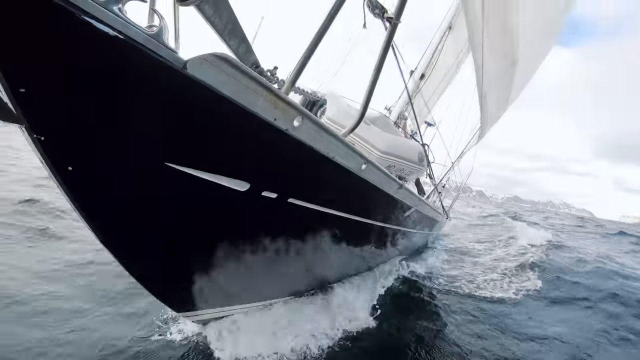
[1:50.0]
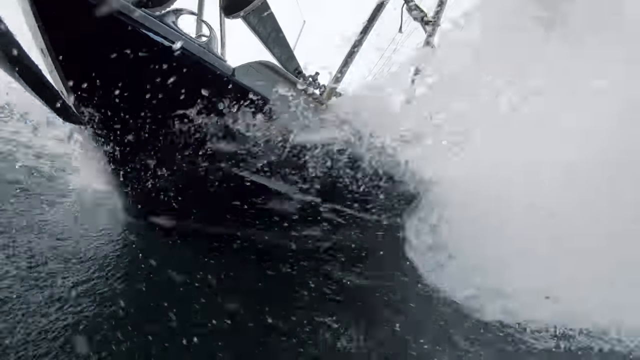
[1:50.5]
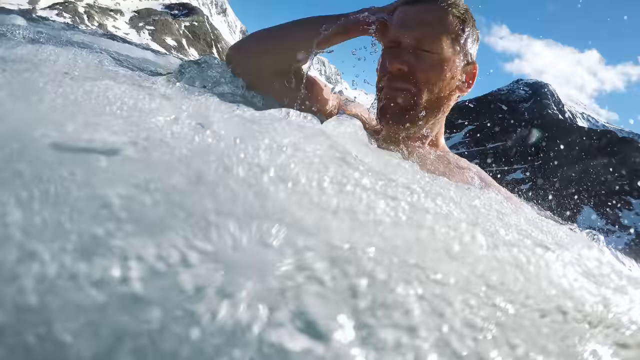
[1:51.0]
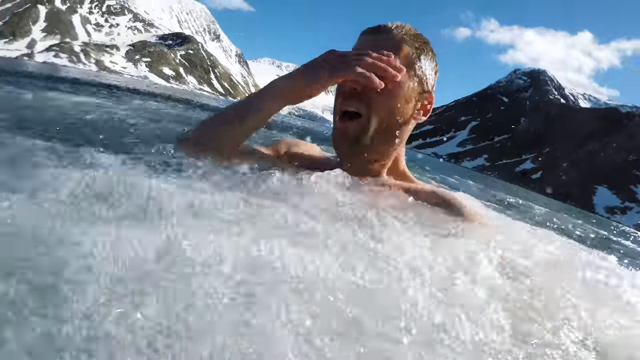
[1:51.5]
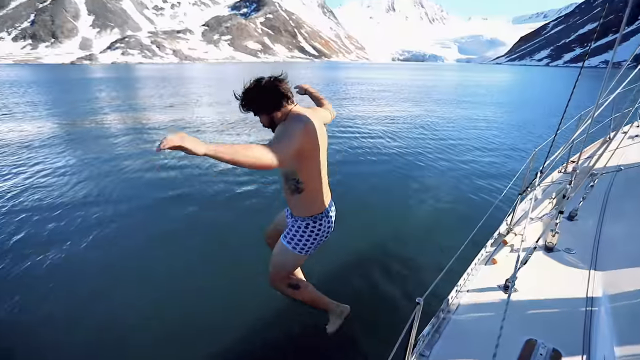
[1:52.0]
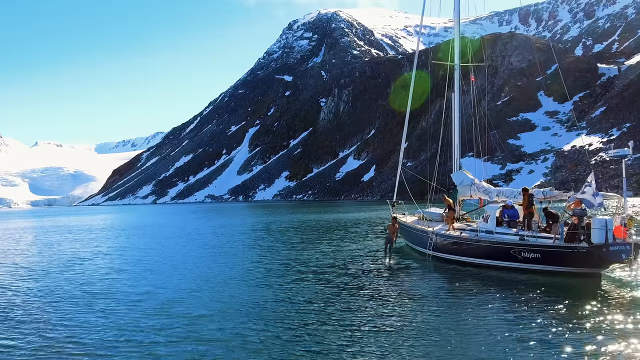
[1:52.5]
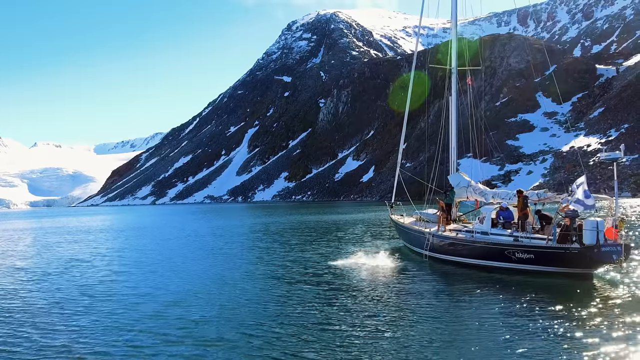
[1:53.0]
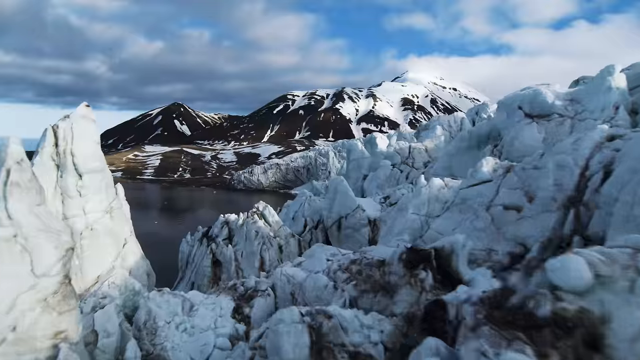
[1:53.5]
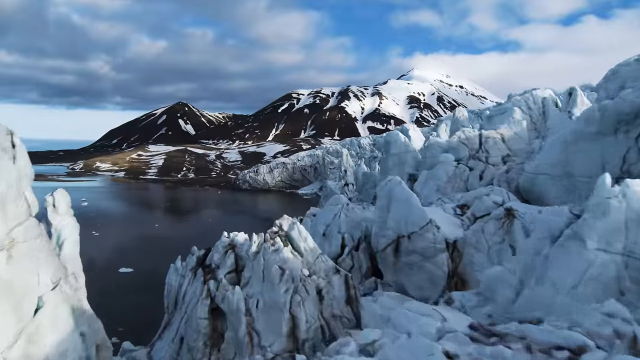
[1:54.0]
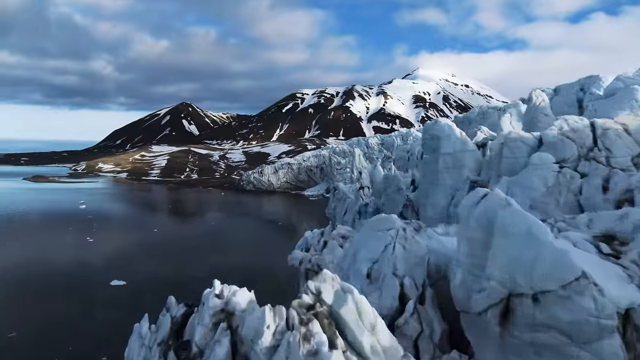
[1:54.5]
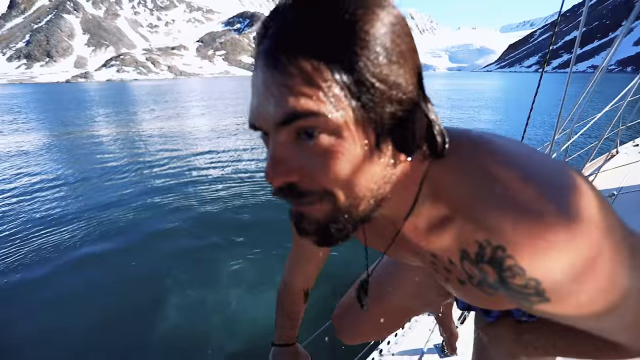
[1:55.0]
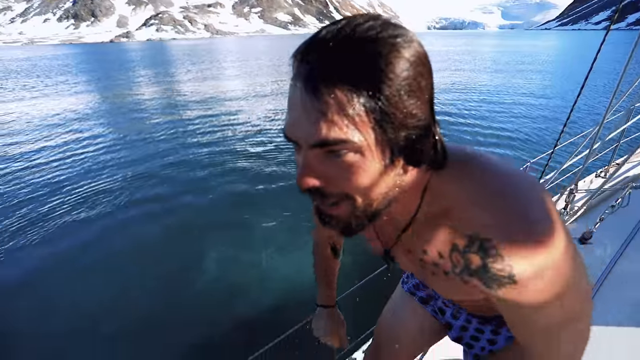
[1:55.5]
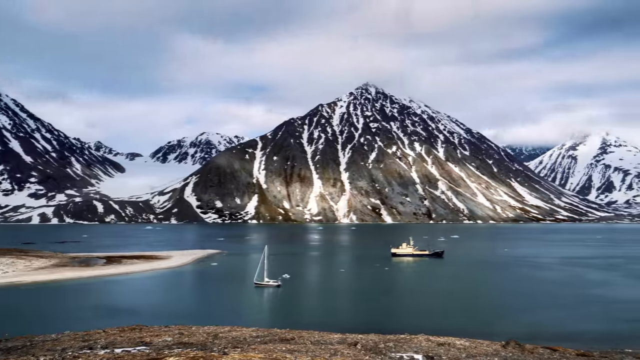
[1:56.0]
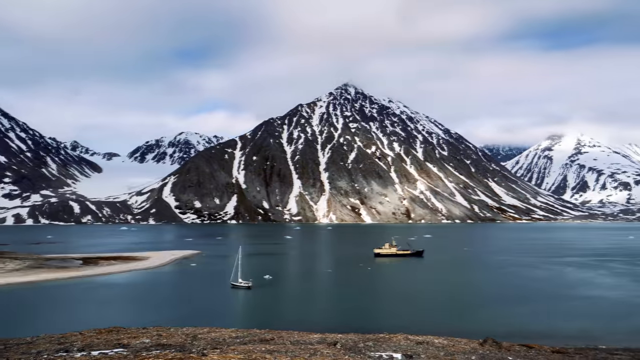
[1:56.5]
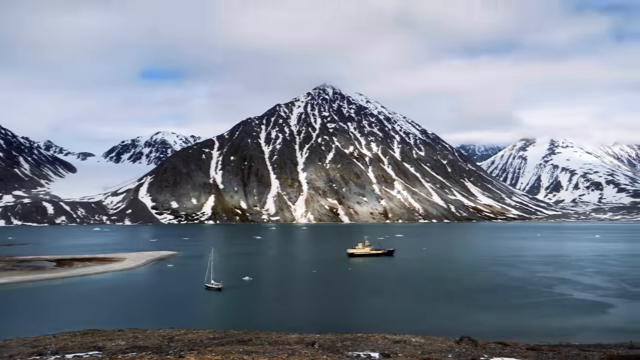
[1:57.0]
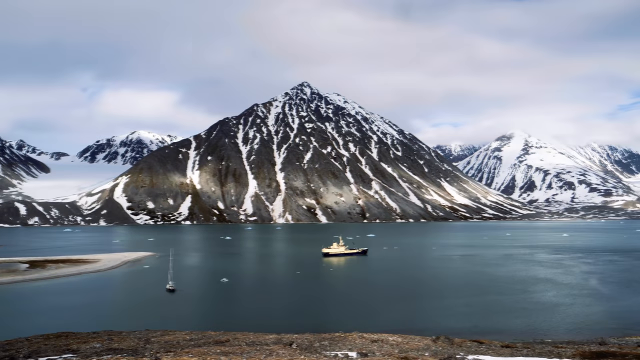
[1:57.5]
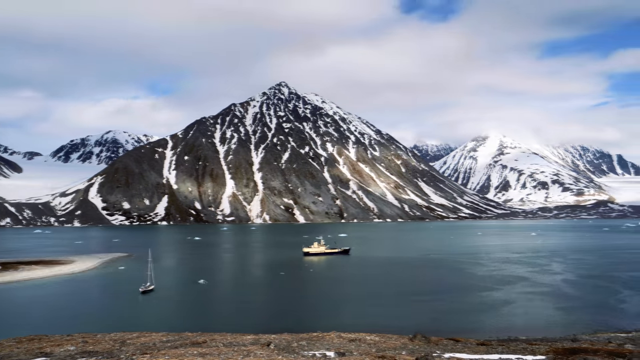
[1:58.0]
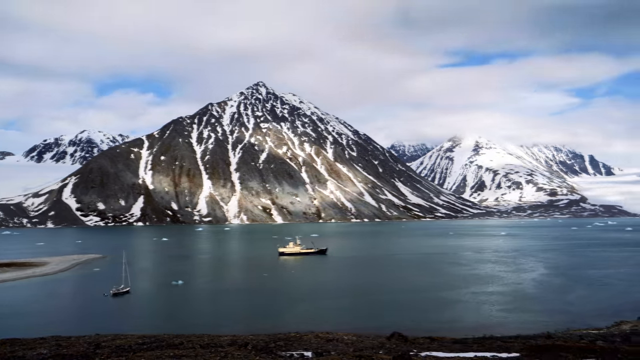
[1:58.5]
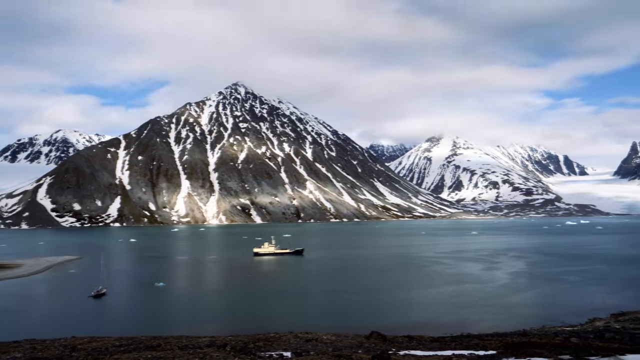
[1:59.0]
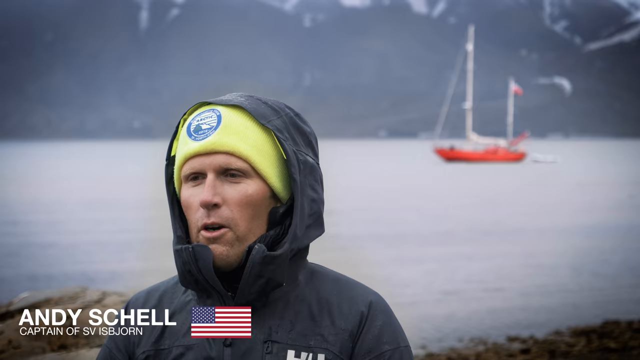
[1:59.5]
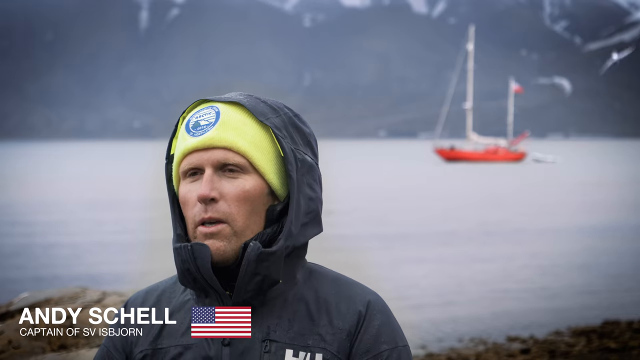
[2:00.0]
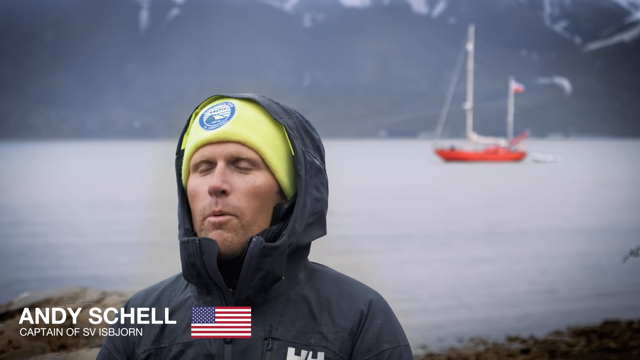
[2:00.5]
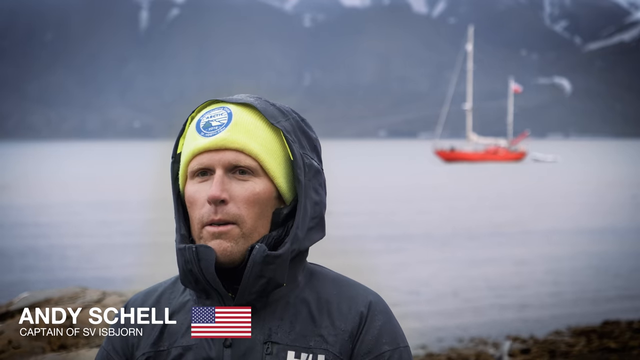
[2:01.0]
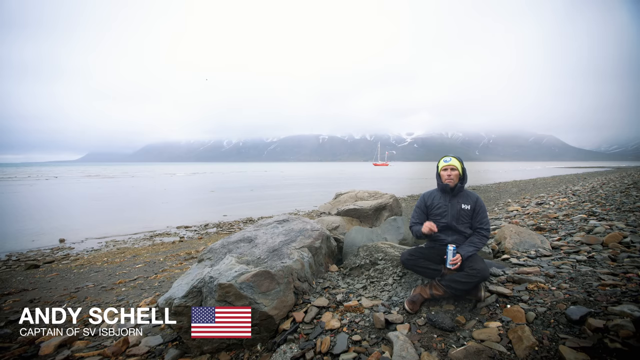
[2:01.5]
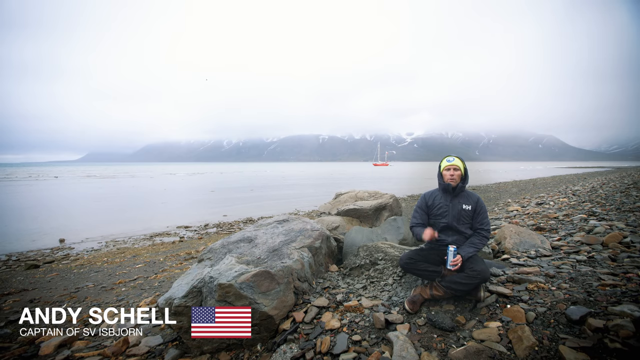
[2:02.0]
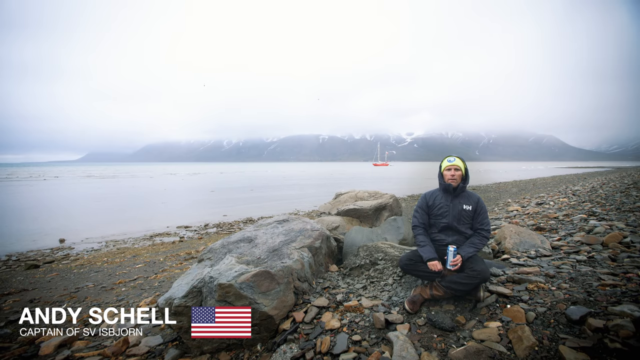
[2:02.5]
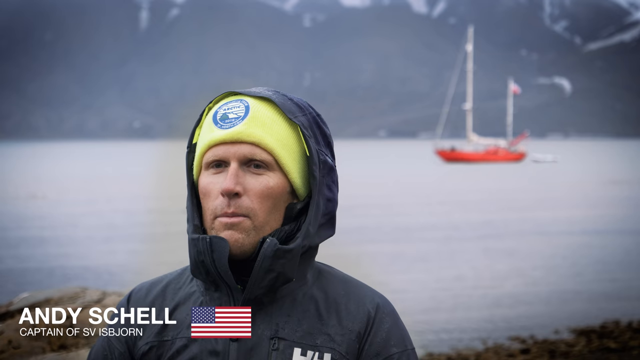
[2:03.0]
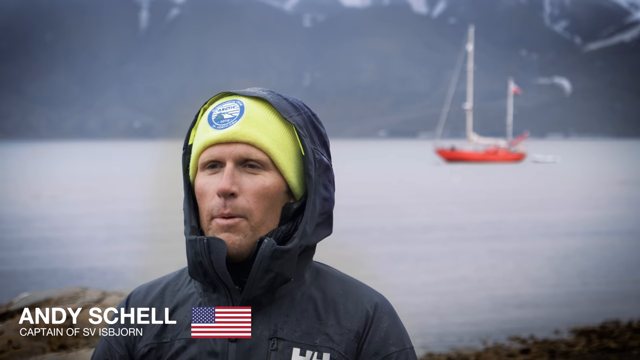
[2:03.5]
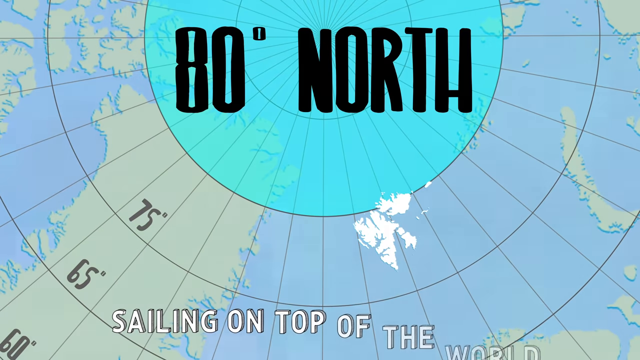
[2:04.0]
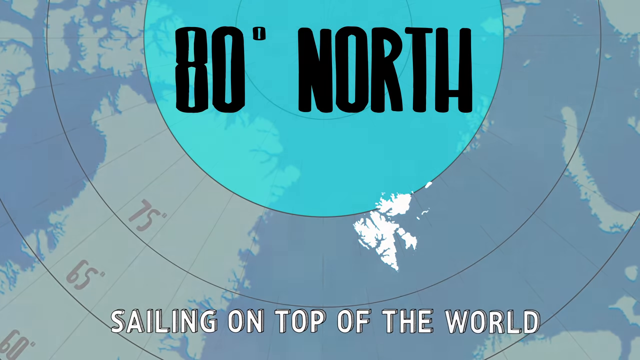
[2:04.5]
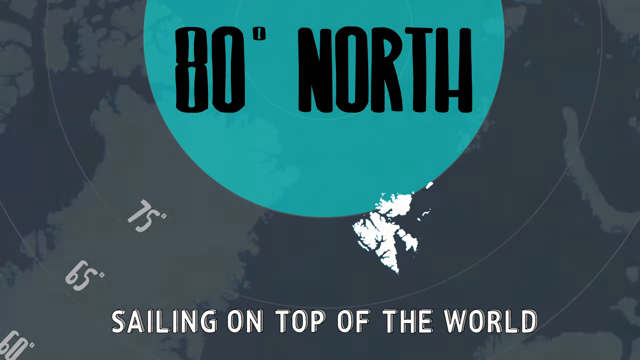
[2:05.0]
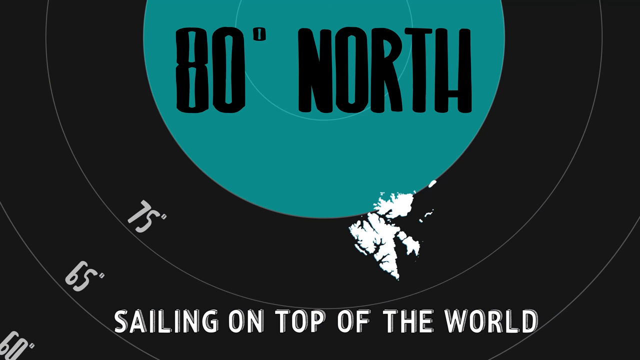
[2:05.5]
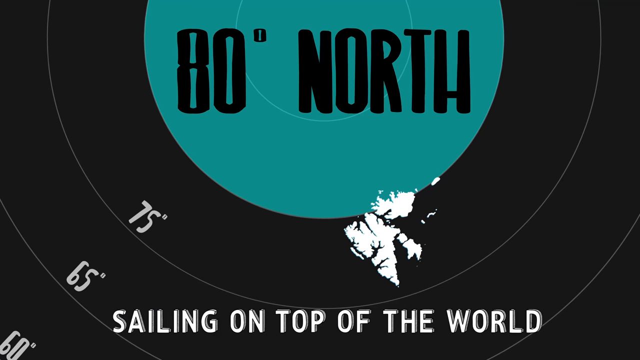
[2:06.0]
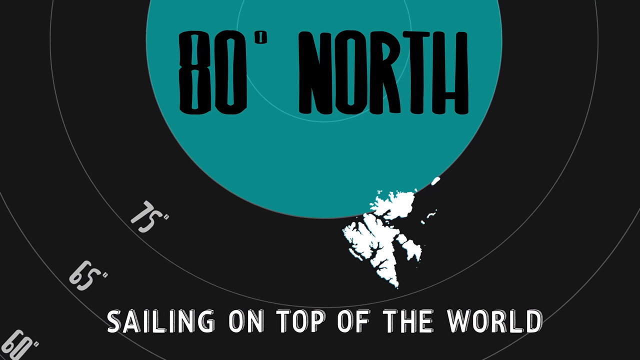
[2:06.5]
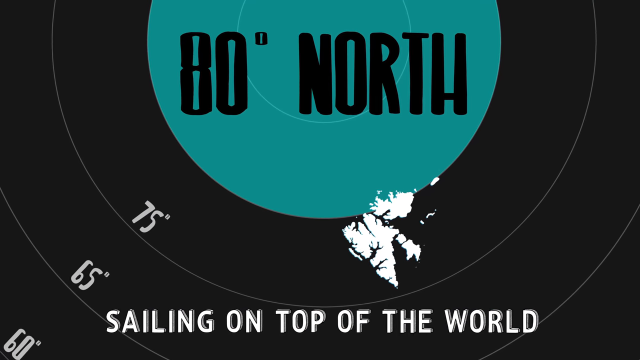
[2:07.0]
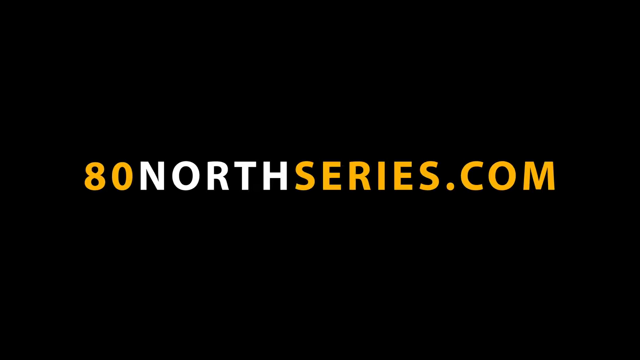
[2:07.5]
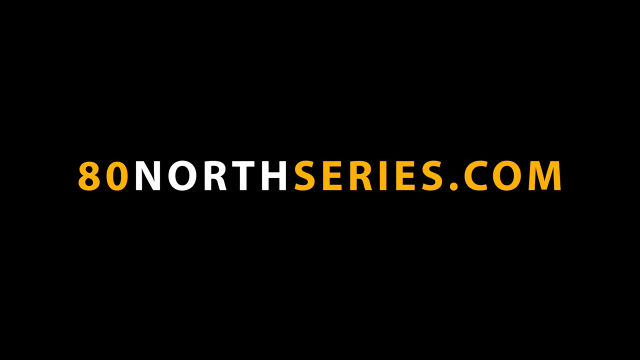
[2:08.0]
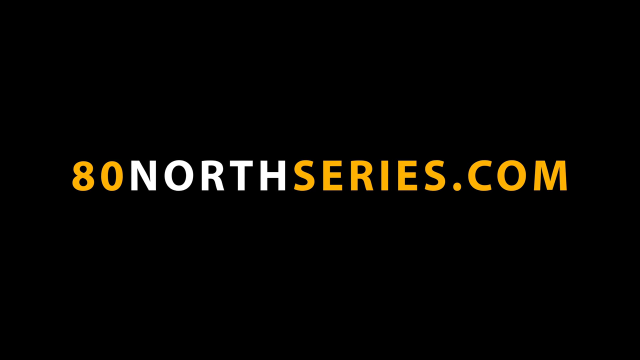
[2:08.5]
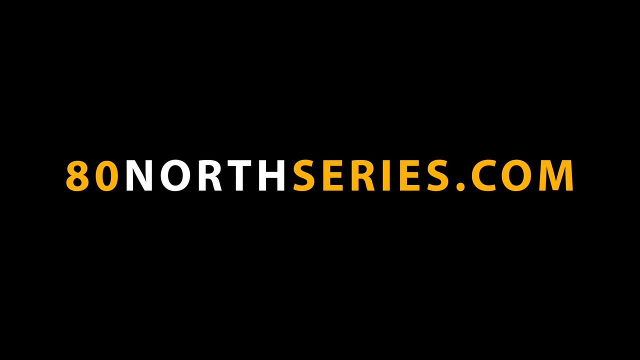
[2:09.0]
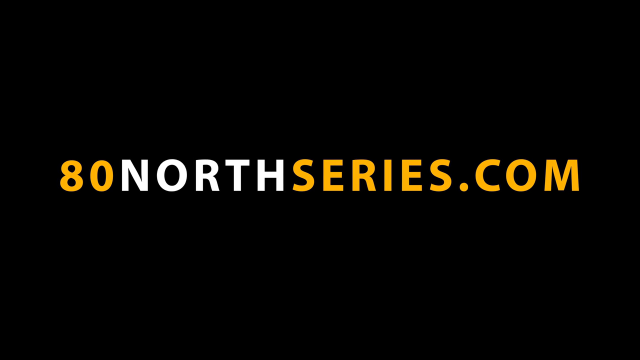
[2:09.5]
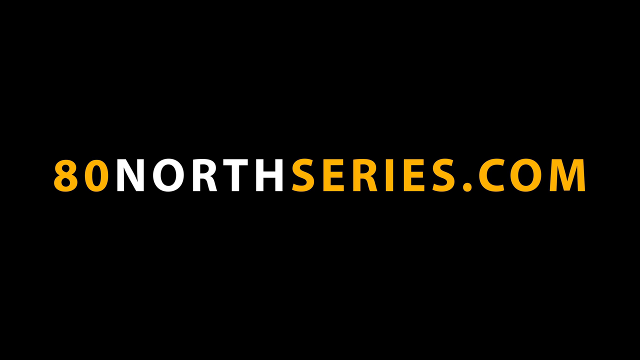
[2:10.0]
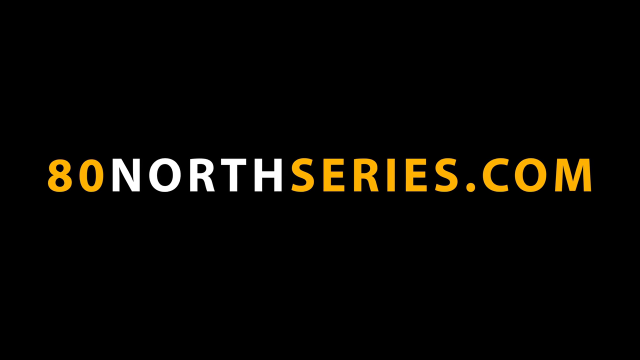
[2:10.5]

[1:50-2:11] A sailboat goes through very rough waters, then stops and puts down its sails, and the men jump out and swim. A man on the shore wearing a hood, a hat and a zipped-up jacket speaks, with a red boat behind him. A map appears with the text "80 degrees north", showing the outskirts of the area. The words "sailing on top of the world" appear on screen, along with "80northseries.com" in yellow and white letters. Again the men in bathing suits jump off the sailboat, surrounded by mountains with snow on the tops, and the water around them seems to bubble a little. A man sits on a shore with no snow.